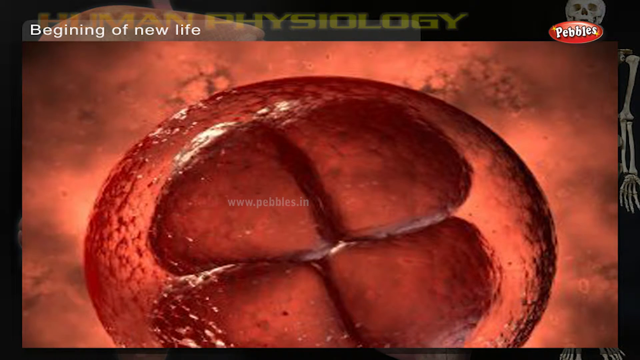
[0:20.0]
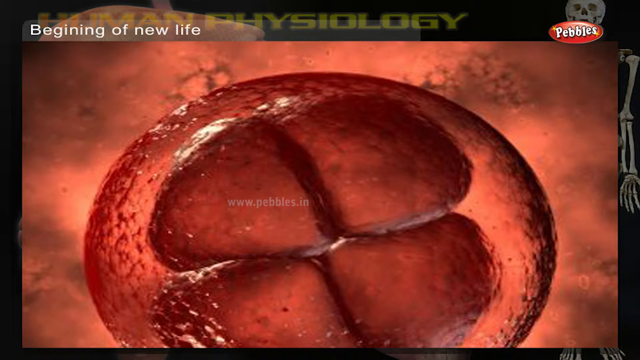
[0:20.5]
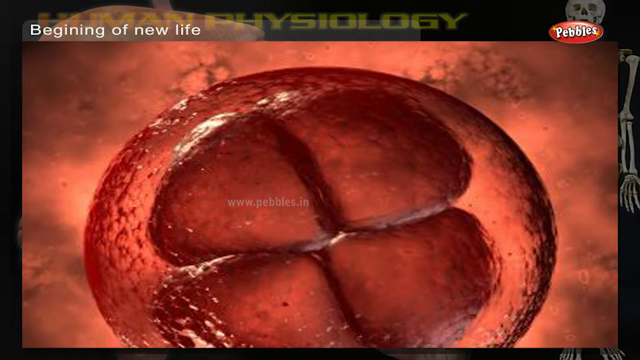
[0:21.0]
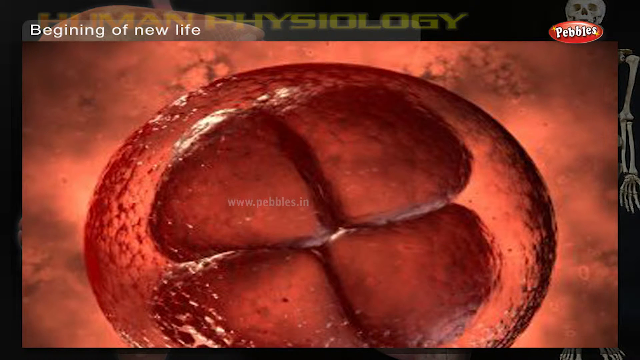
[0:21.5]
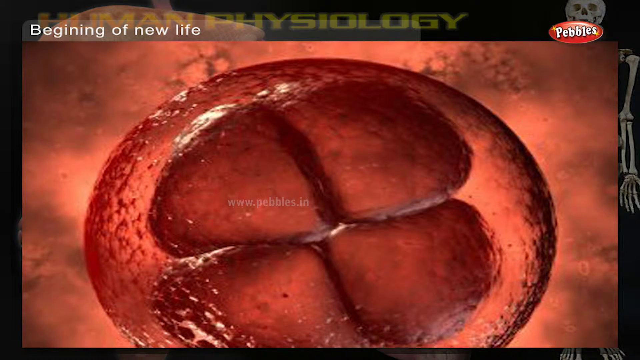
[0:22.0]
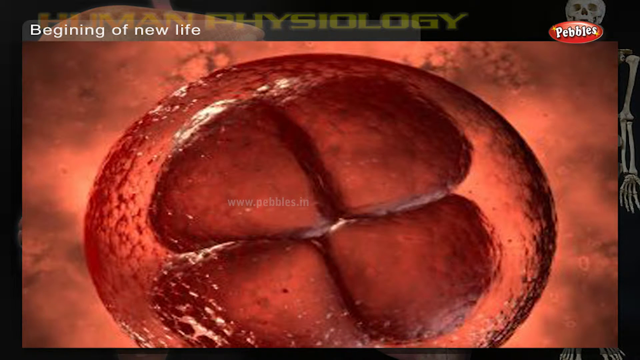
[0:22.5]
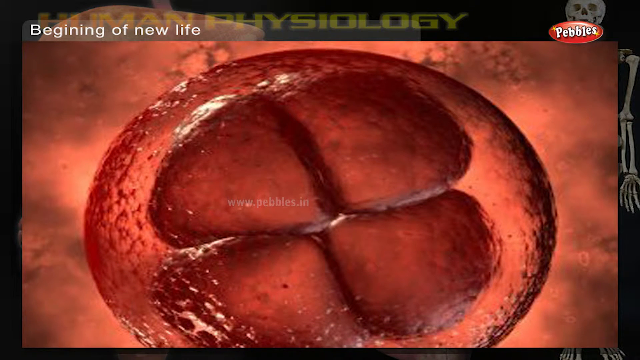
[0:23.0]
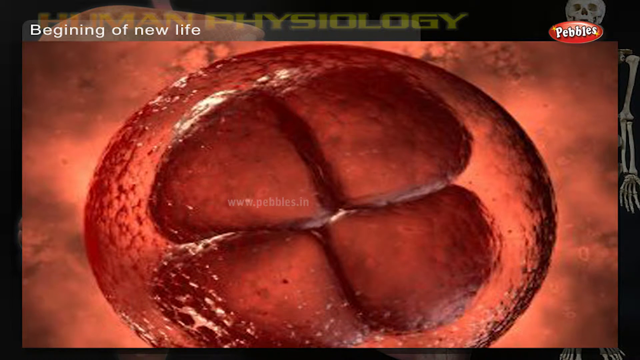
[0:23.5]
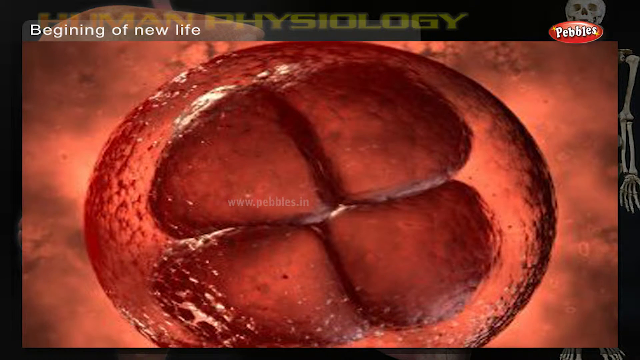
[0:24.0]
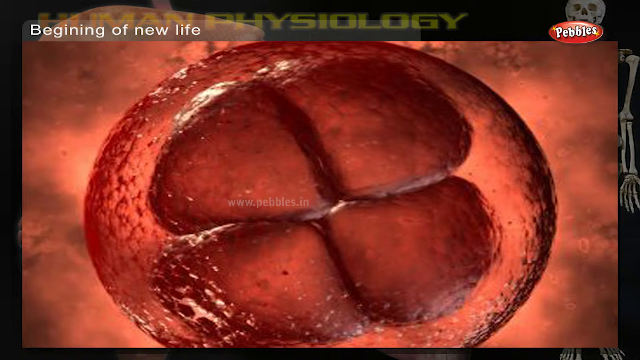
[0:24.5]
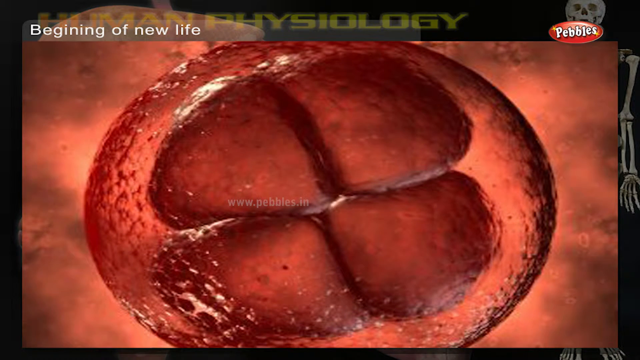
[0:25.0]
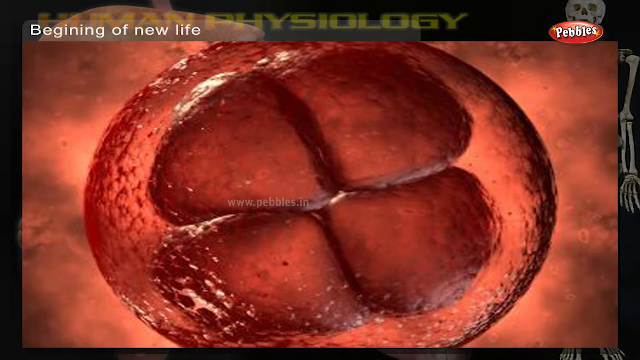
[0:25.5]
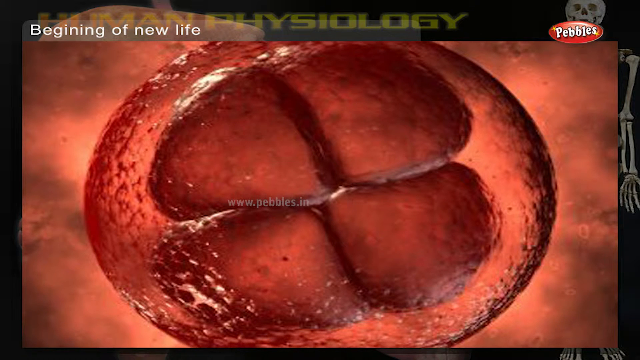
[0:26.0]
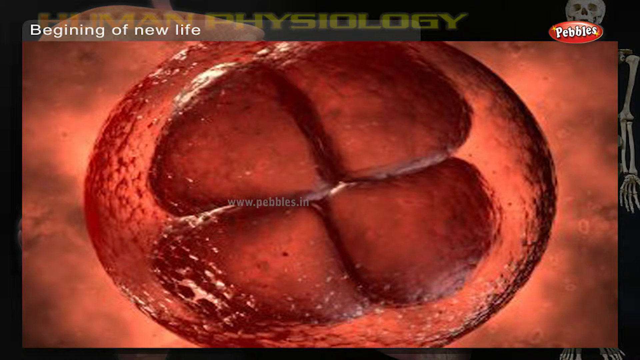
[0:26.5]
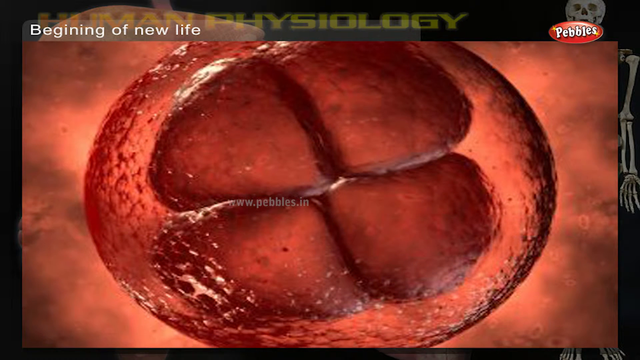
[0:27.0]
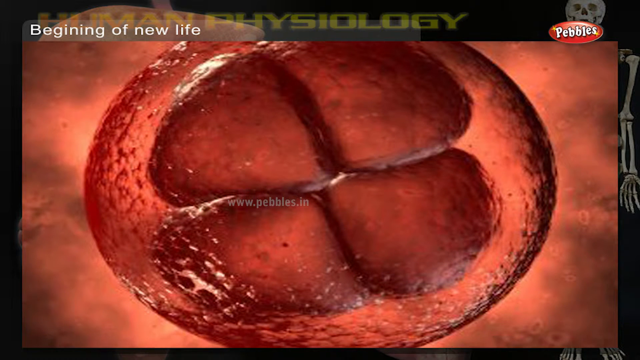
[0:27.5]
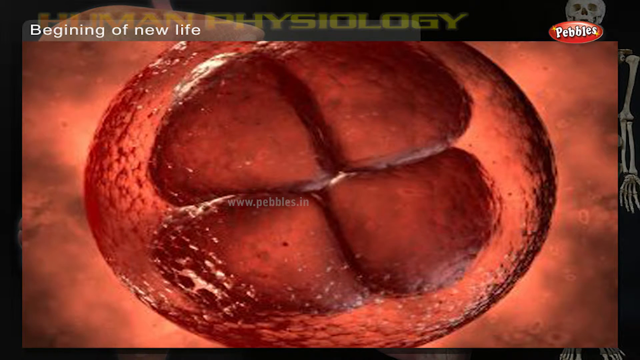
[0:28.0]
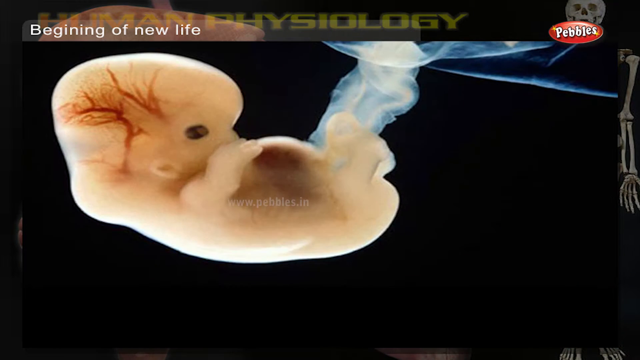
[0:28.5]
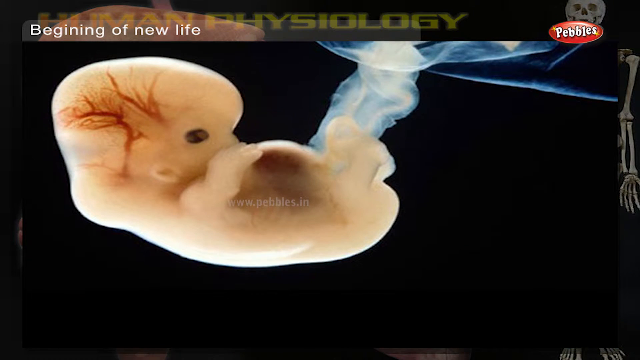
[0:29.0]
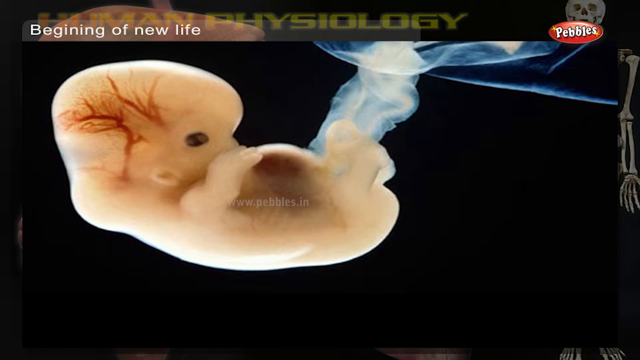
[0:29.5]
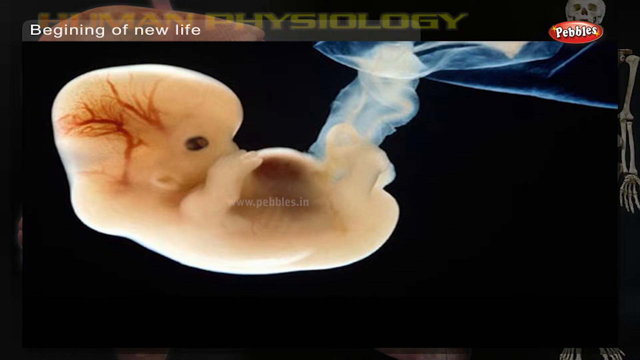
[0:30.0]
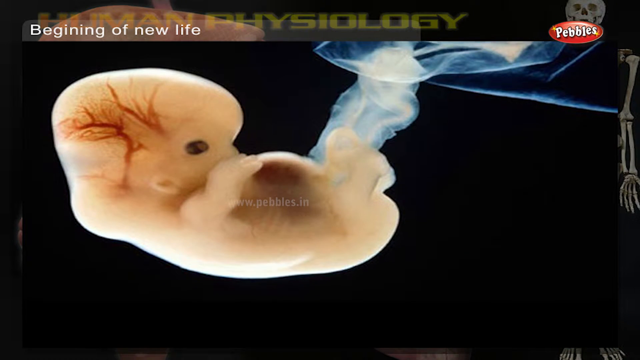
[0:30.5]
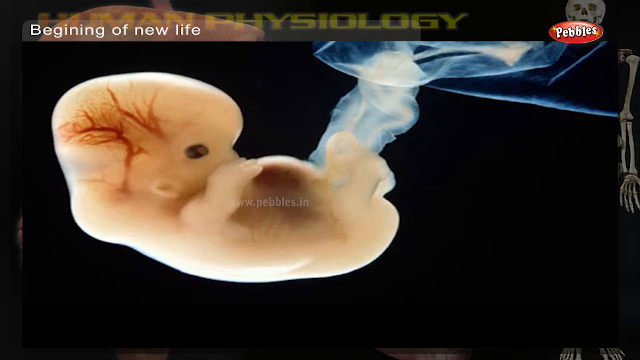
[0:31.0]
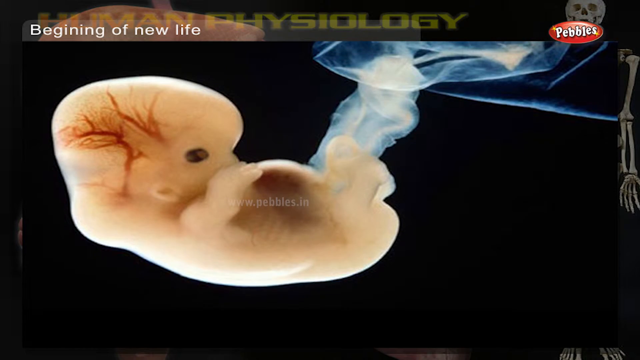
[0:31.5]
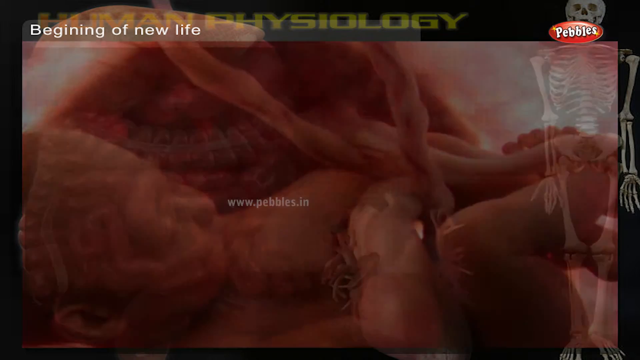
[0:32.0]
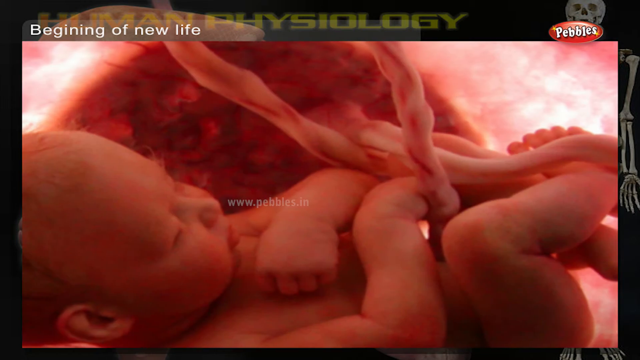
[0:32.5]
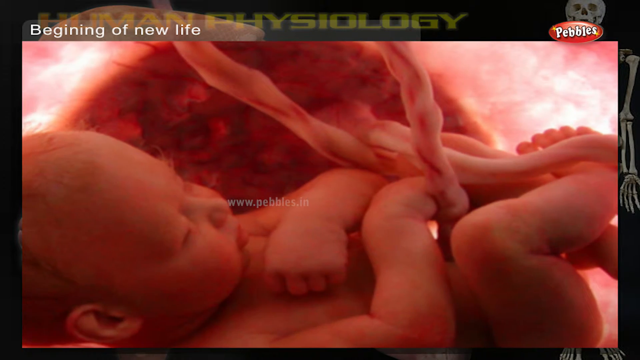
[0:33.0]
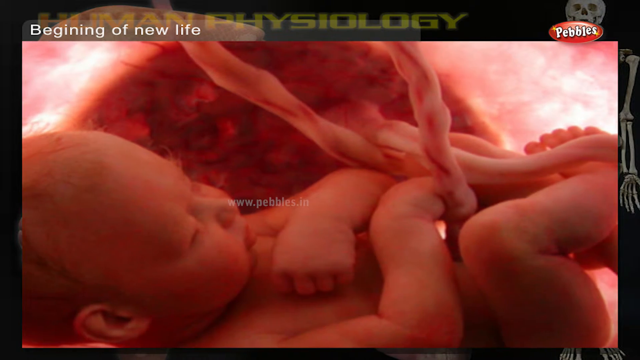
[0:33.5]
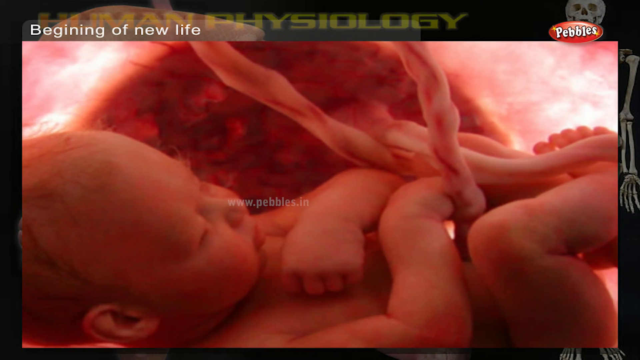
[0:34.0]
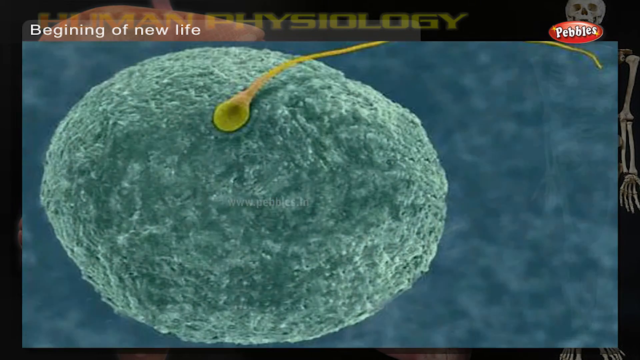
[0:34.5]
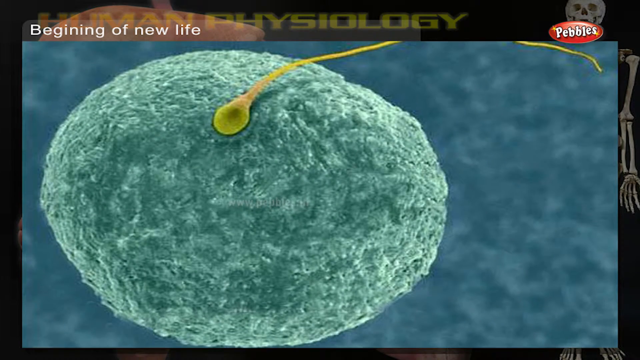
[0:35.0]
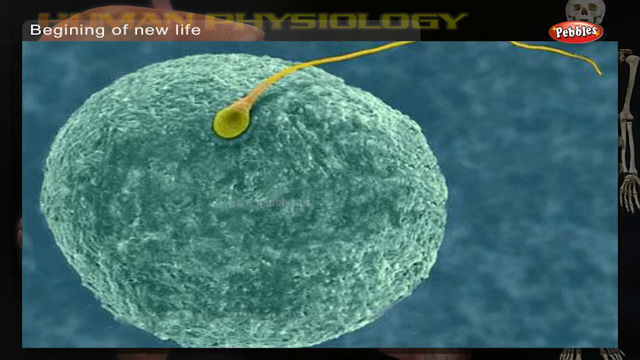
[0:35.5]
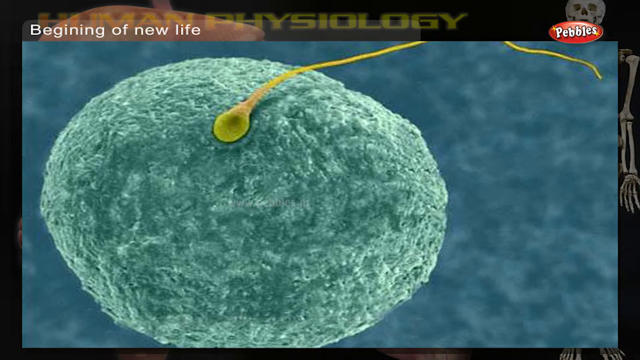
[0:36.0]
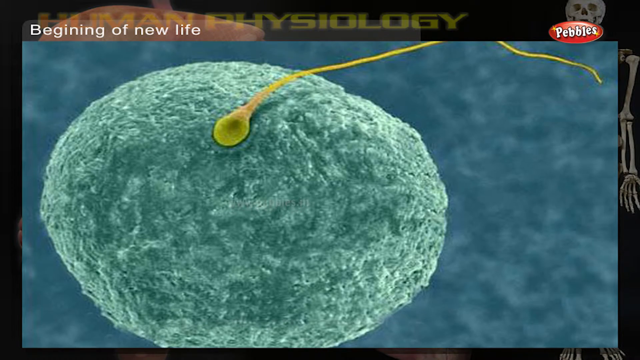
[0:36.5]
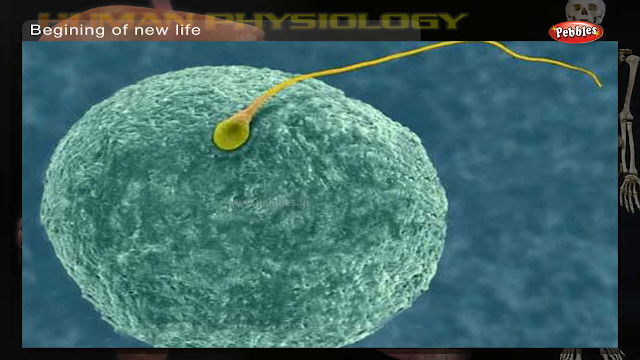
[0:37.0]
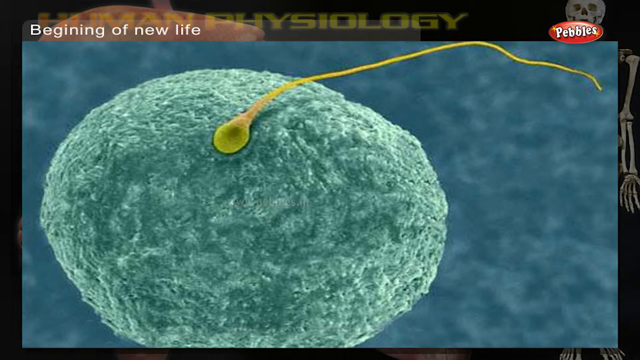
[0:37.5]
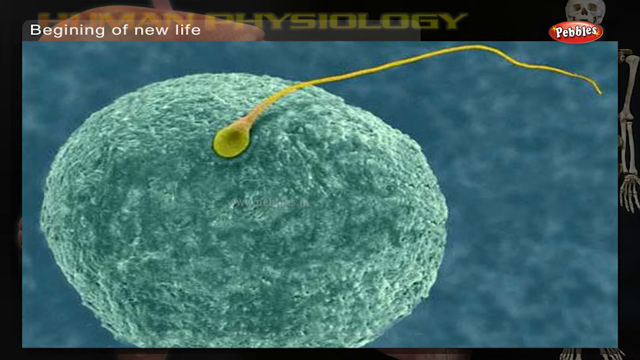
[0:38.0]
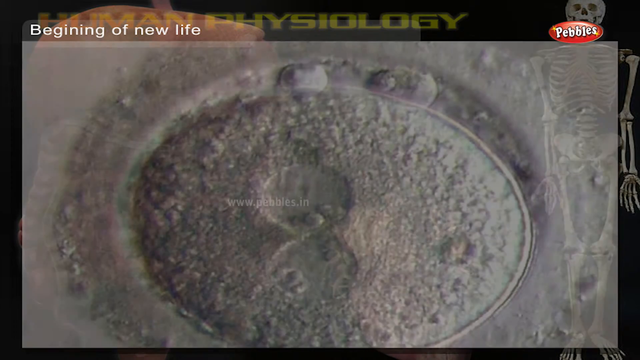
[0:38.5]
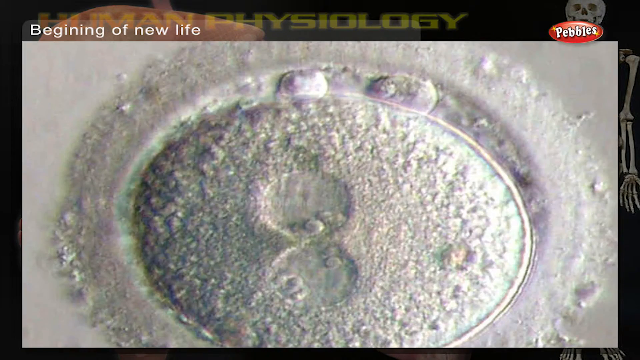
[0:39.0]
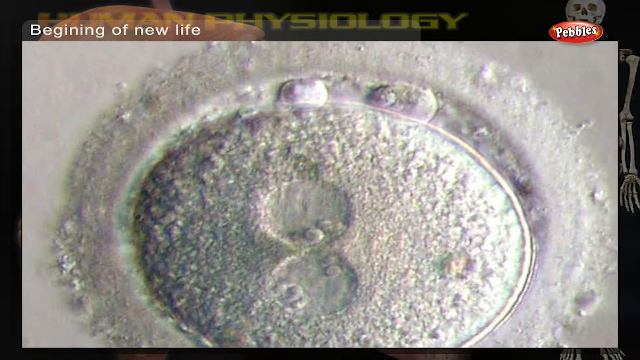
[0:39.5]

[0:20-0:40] A diagram shows an unidentified big red ball that is see-through, with four chunks of red stuff inside pushed against each other. It cuts to a diagram of what appears to be a fetus, colored white, with visible eyes and ears; the head area looks a little deformed and has some veins, the body is formed but not fully, and toward the feet area it fogs out into something that may be the placenta or something else. The video then cuts to what seems to be the baby in the womb from the beginning of the video, apparently grown to full term, connected to the umbilical cord. Next is another diagram of sperm reaching an egg, a different picture from the earlier one, in green colors. Then comes an unidentified picture of white circles that looks somewhat like pictures of the moon showing footprints.